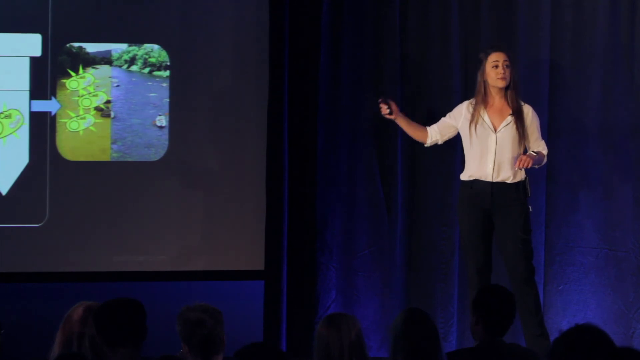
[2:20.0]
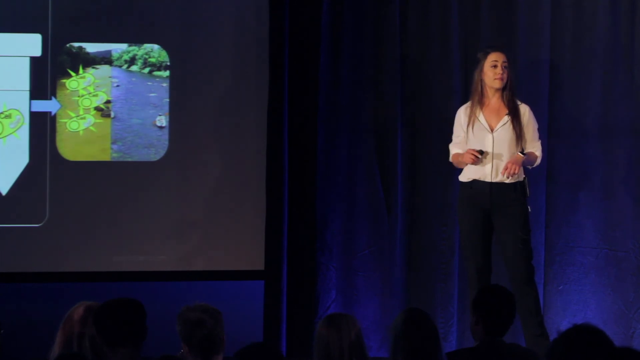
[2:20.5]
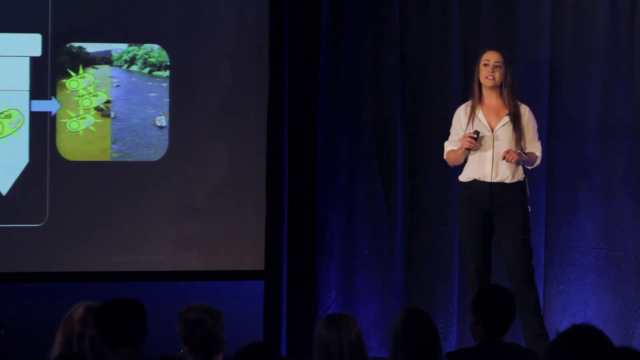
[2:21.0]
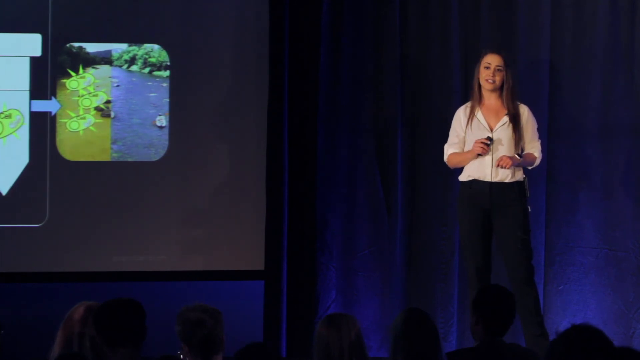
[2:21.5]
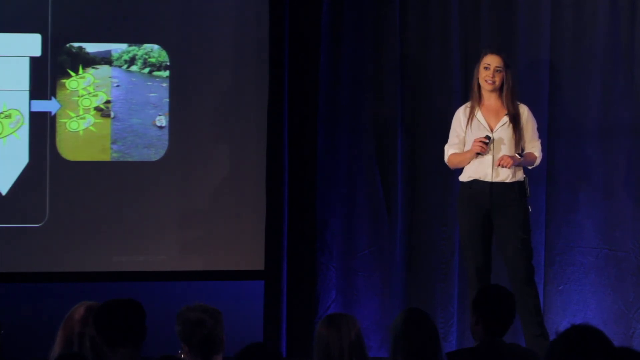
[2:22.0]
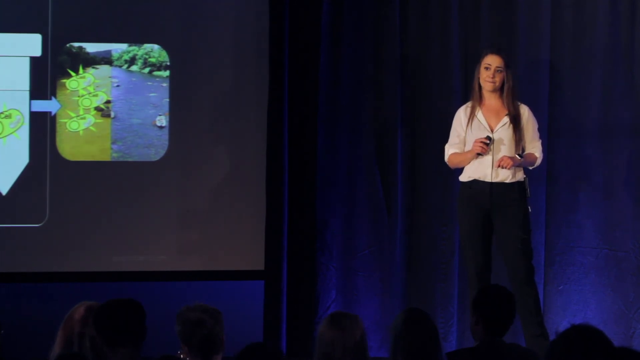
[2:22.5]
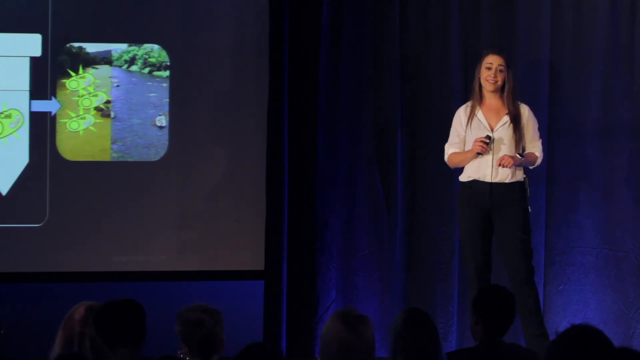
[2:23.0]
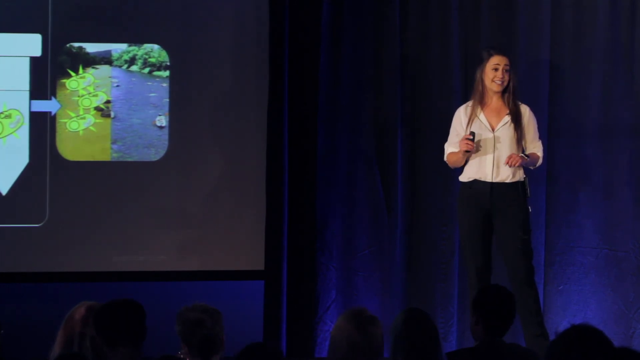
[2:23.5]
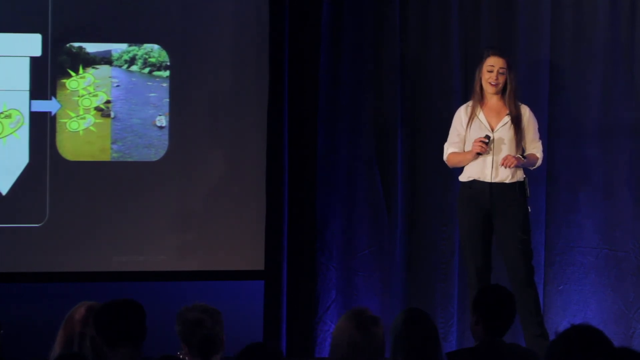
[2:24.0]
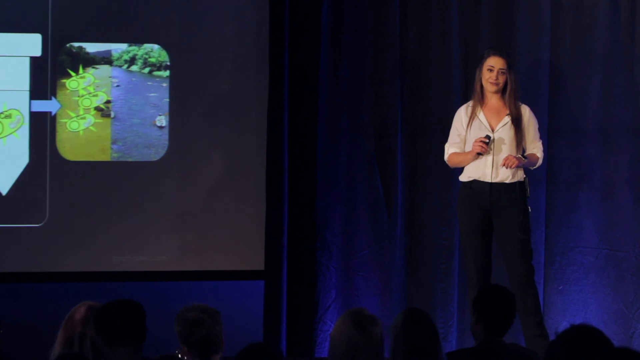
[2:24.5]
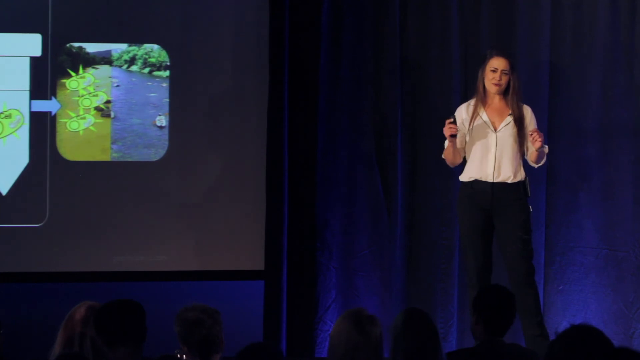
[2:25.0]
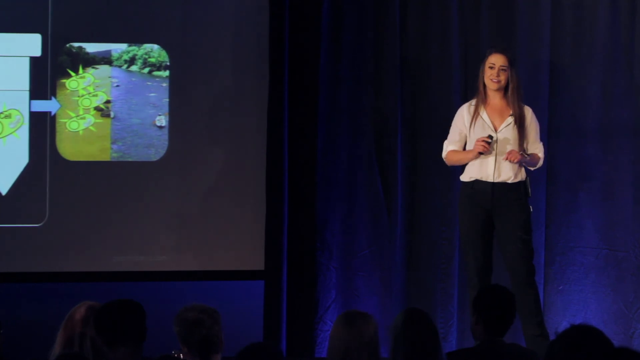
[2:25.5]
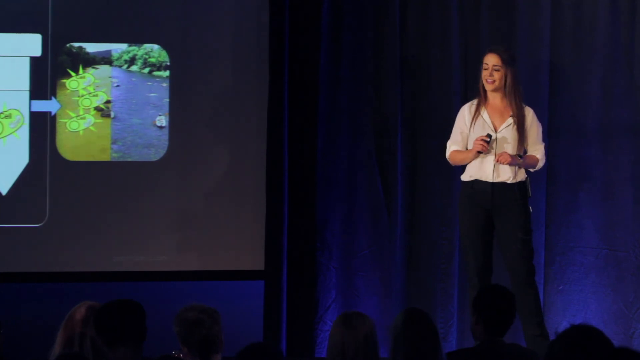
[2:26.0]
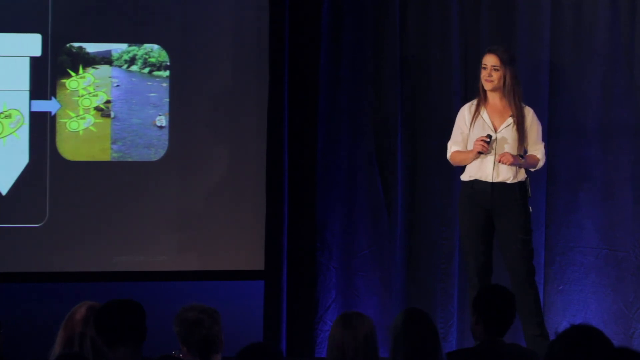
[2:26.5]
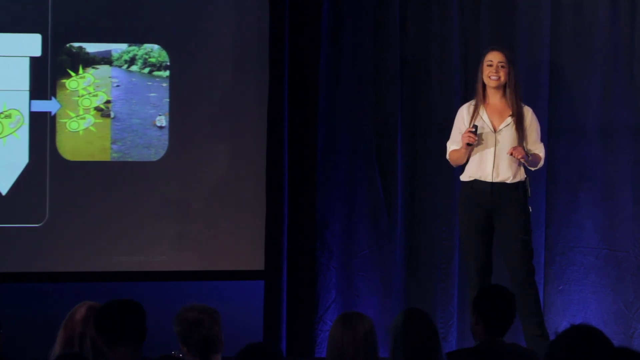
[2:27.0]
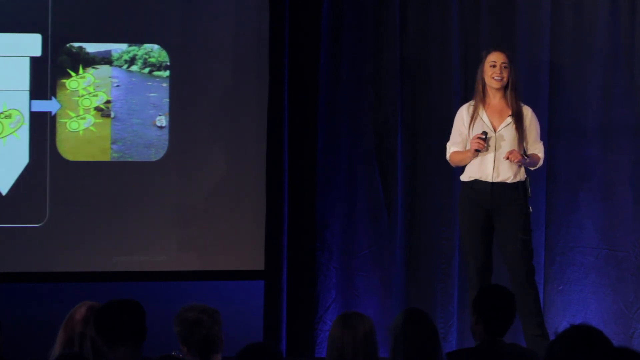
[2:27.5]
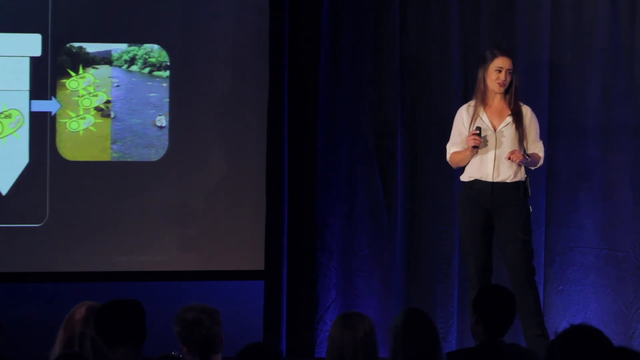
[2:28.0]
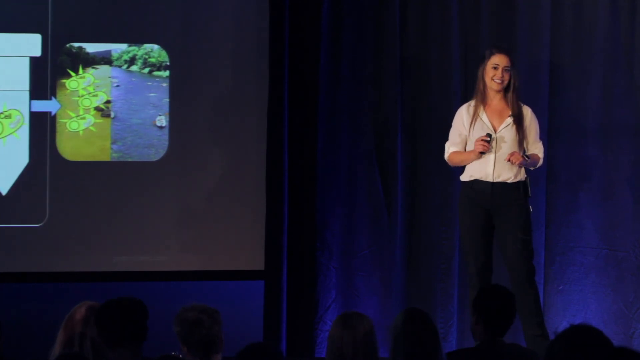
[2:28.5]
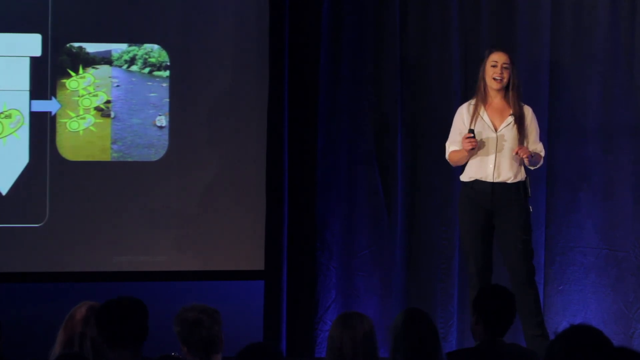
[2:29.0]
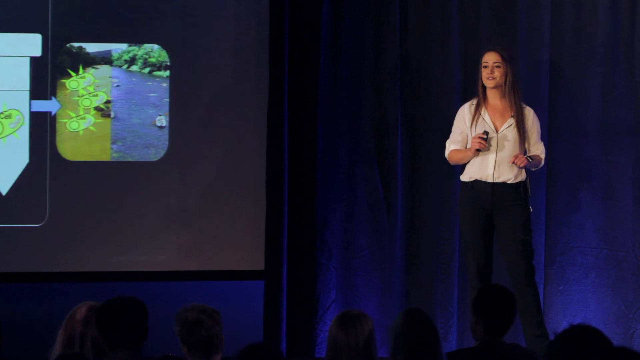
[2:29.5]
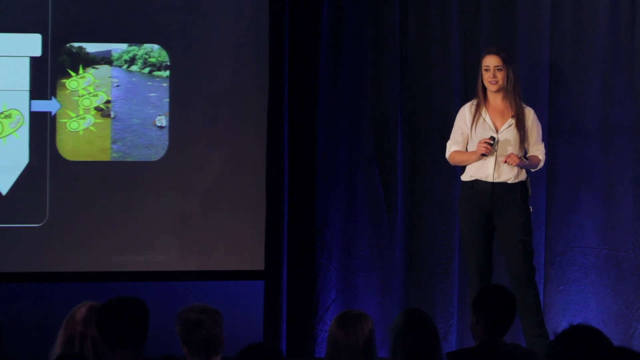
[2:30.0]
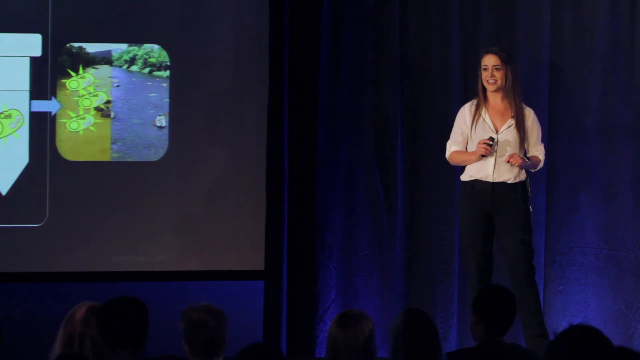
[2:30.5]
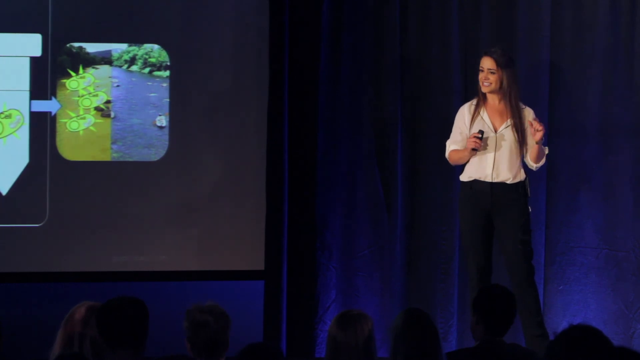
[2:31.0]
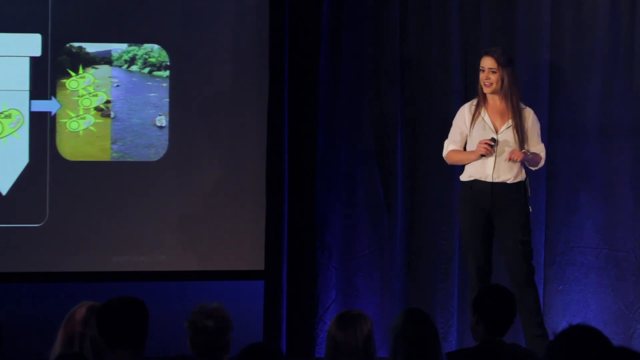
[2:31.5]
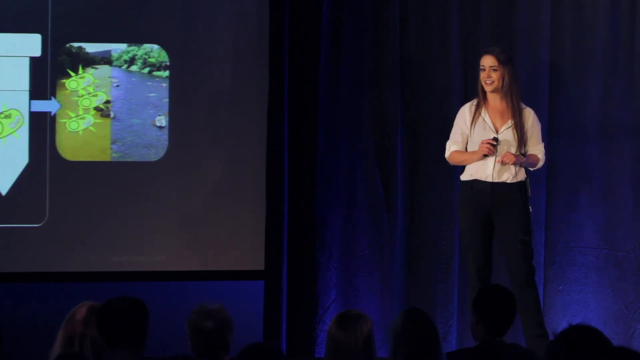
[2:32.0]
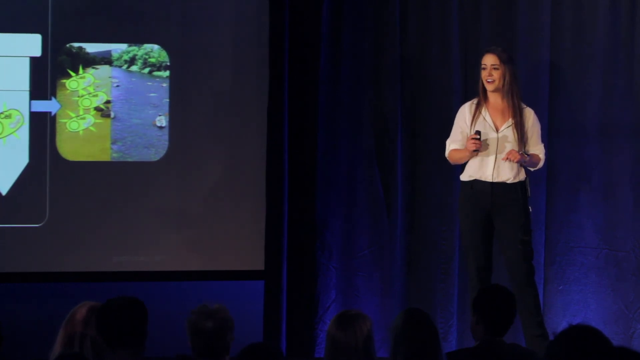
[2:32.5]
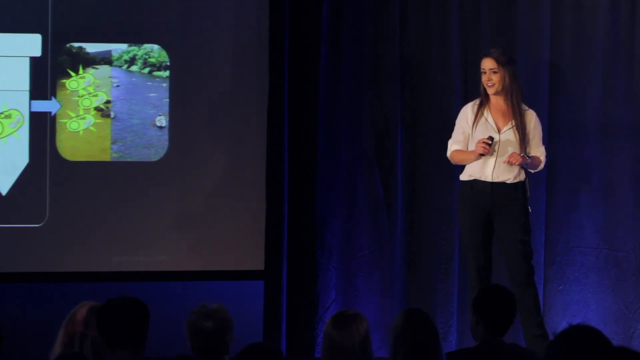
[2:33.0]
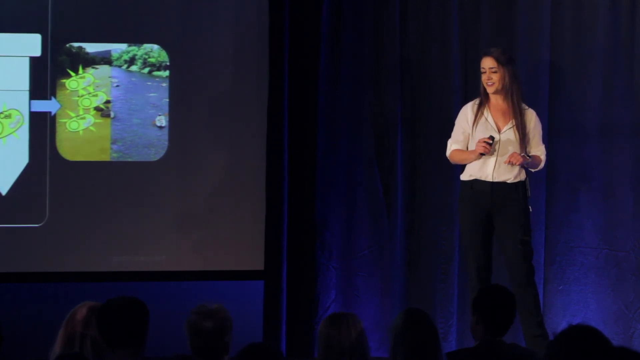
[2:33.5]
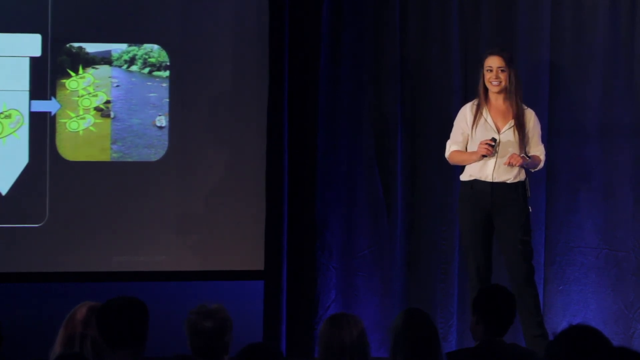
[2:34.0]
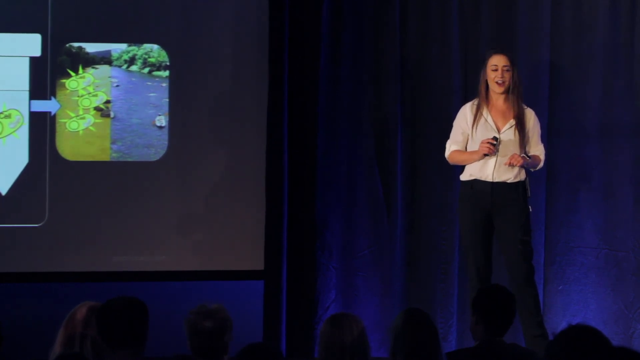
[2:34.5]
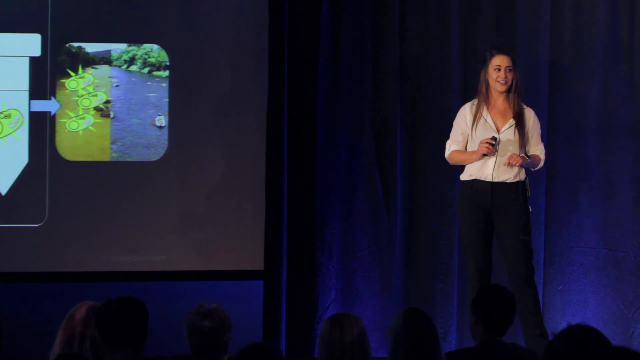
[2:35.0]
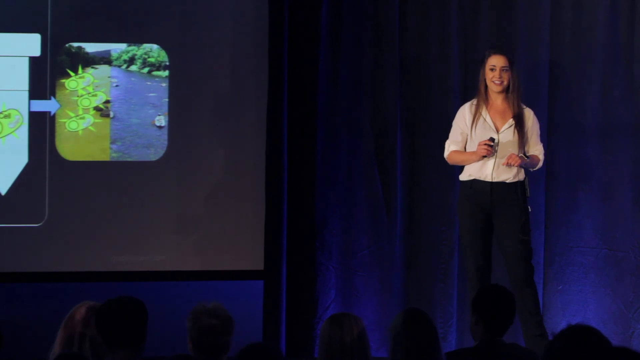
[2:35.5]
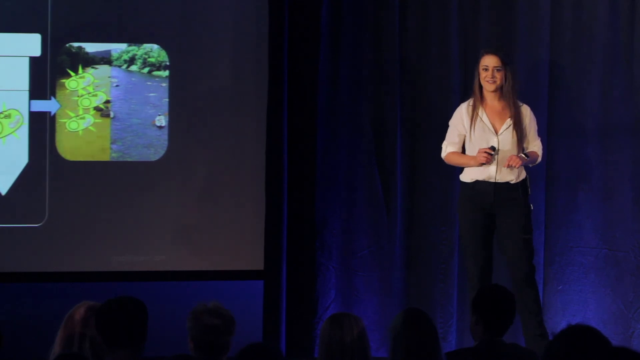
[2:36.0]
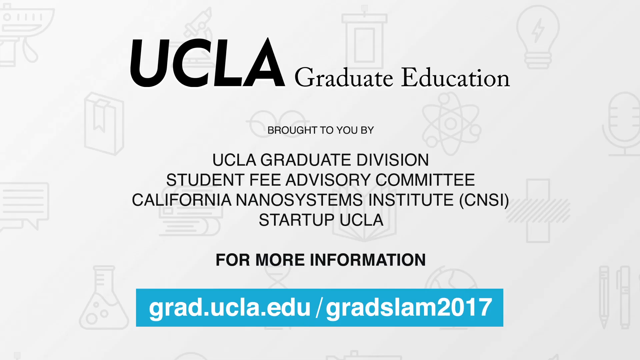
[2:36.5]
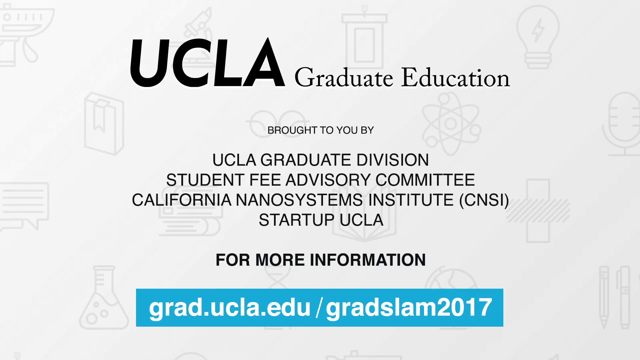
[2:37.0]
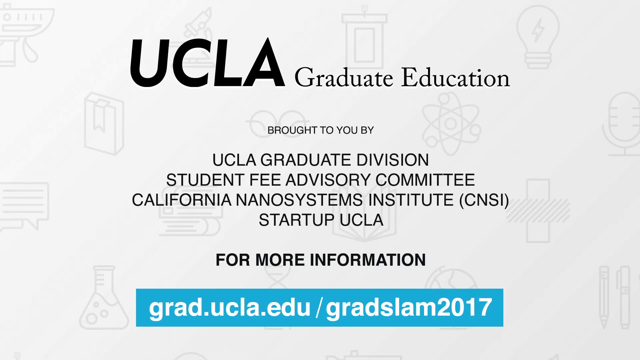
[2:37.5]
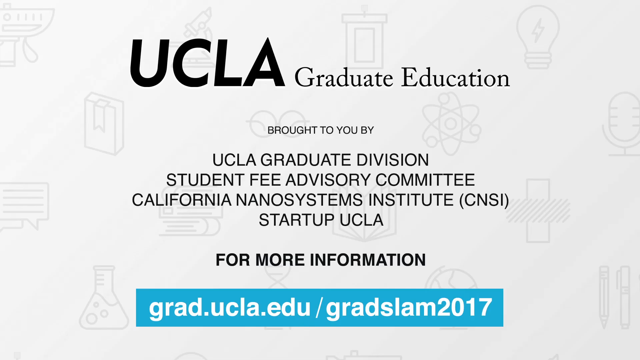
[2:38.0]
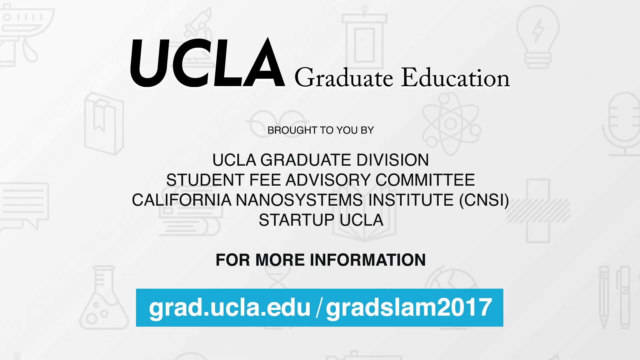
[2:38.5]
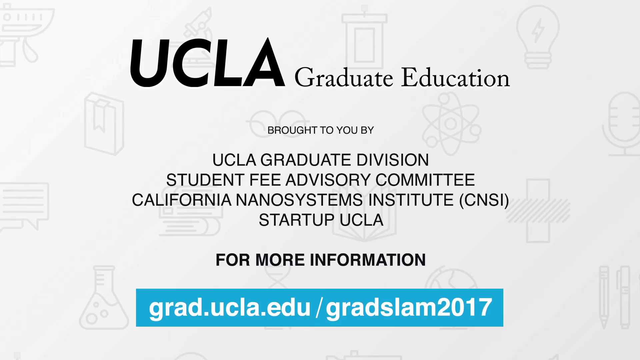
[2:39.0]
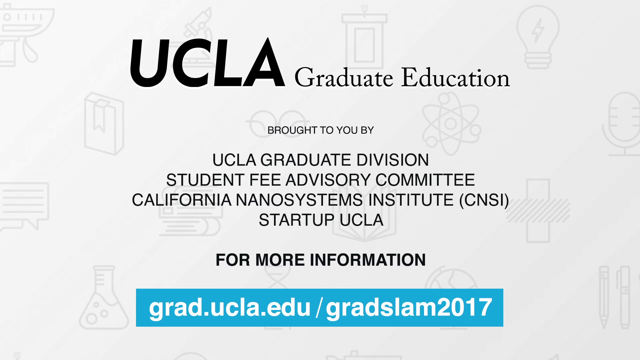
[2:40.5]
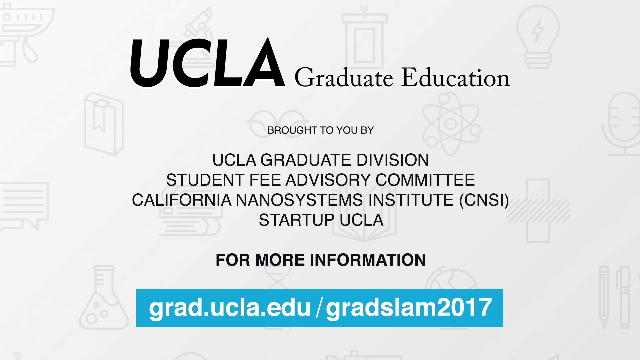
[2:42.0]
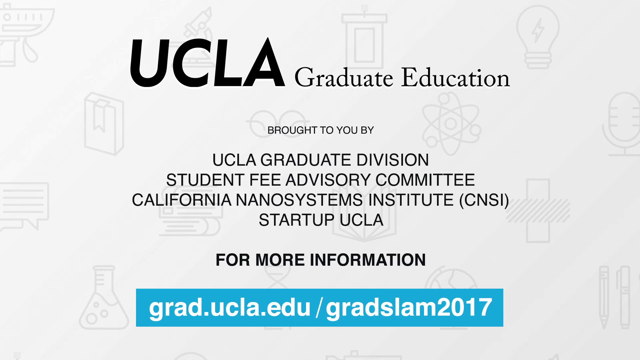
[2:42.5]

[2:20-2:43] In TED Talk-style footage, a woman on the right wears a white dress shirt and black slacks. A blue curtain lit with soft light is visible behind her. She wears a smartwatch and holds a black clicker in one hand to control the projection screen visible on the left. She looks young, apparently in her 30s, and seems very passionate. She keeps smiling, nodding her head and looking toward the audience, uses heavy hand gestures and moves her clicker around. On the projection screen the main focal point is a square box with images: on the left, dirty, murky water with small cartoon-looking gold cells in it; on the other side, possibly meant to be an after picture, clean blue water with some rocks and trees and somebody canoeing. The video then cuts away from the speaker to a white background with a series of gray icons, such as a light bulb, a pair of glasses and a beaker. Black text reads "UCLA Graduate Education, brought to you by UCLA Graduate Division, Student Fee Advisory Committee, California Nanosystems Institute," then "(CNSI)" in parentheses, then "startup UCLA," and then "for more information." A robin's egg blue box with white text reads "for more information, grad.ucla.edu/gradslam 2017." The screen holds on this for a while before the video cuts out.